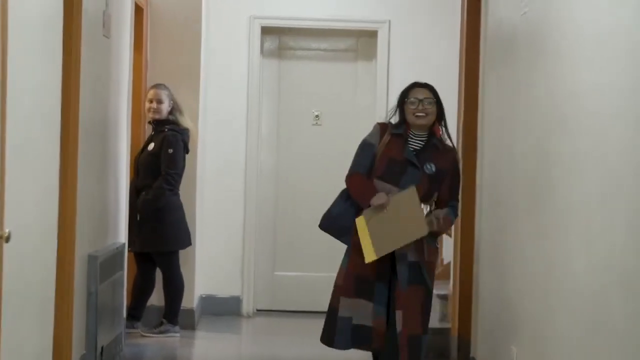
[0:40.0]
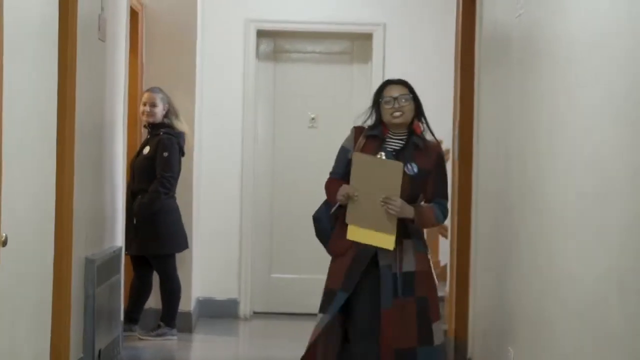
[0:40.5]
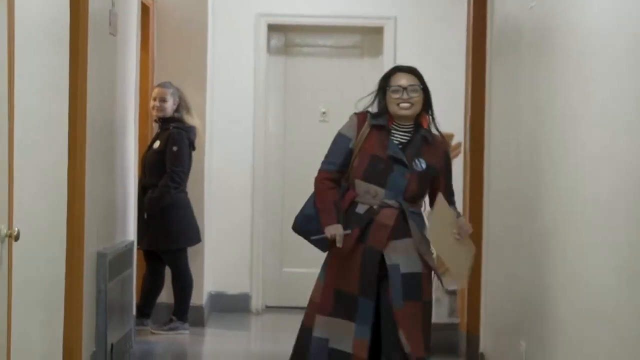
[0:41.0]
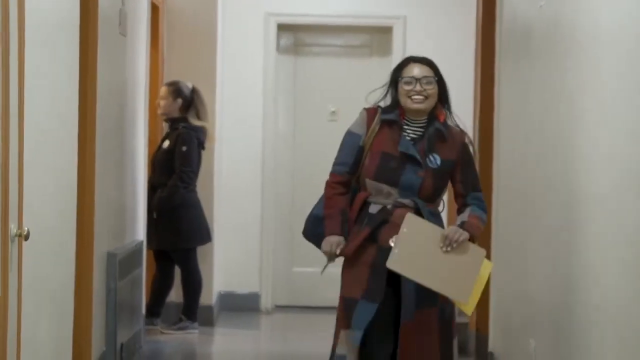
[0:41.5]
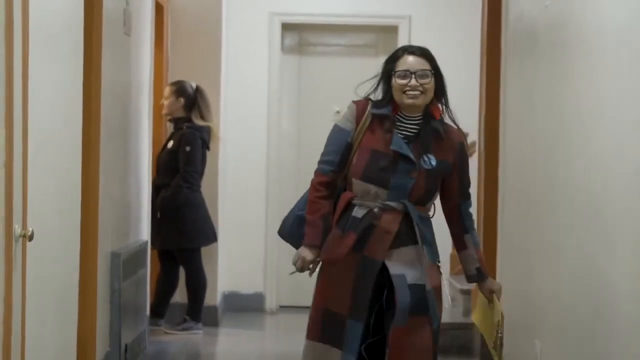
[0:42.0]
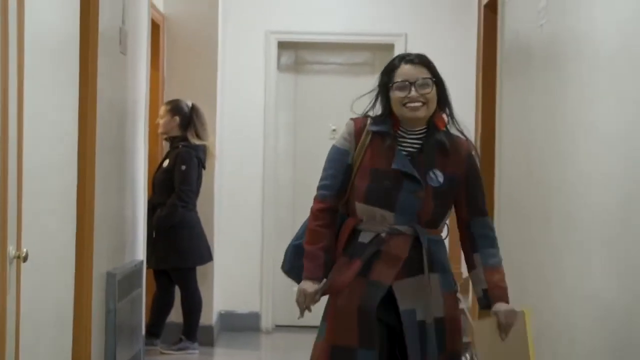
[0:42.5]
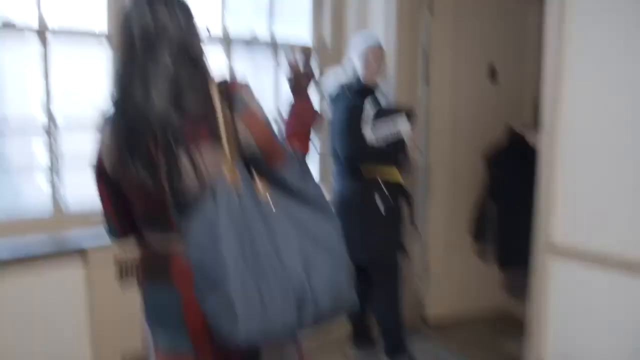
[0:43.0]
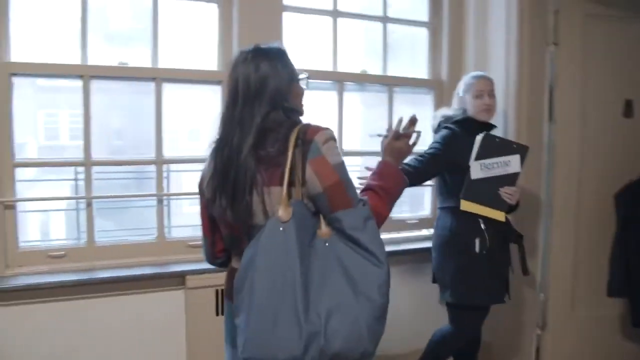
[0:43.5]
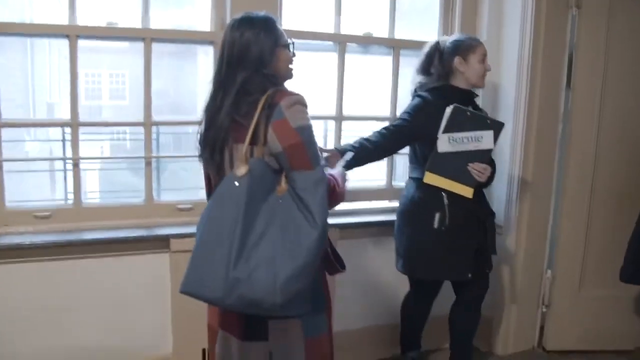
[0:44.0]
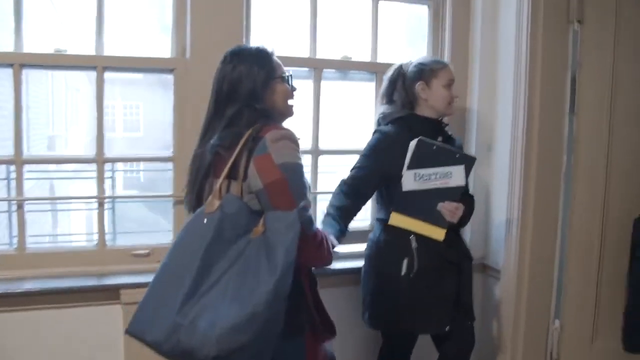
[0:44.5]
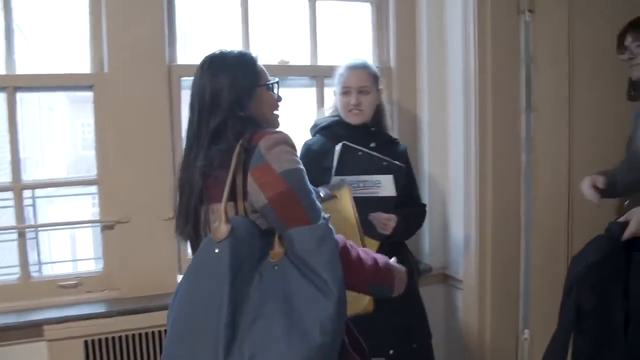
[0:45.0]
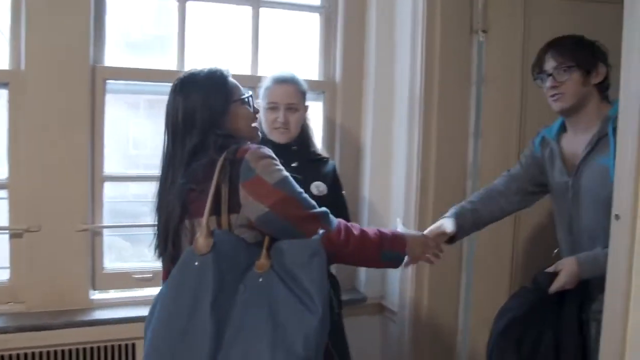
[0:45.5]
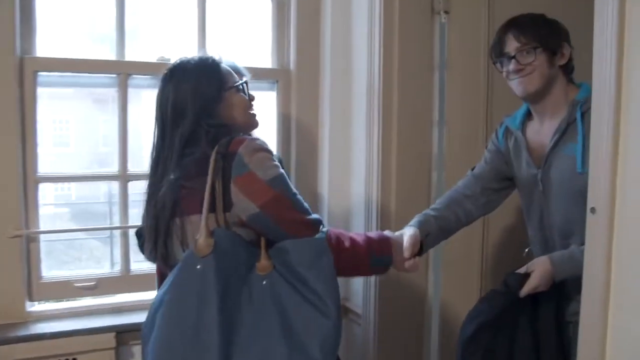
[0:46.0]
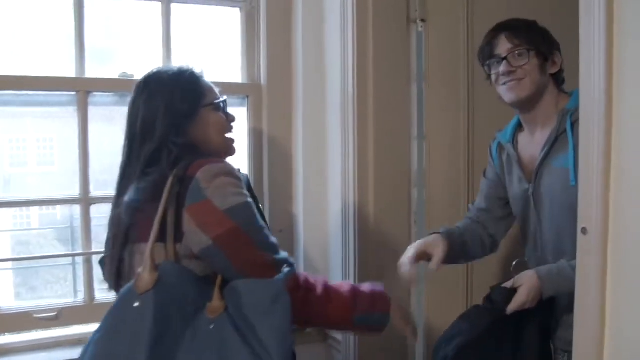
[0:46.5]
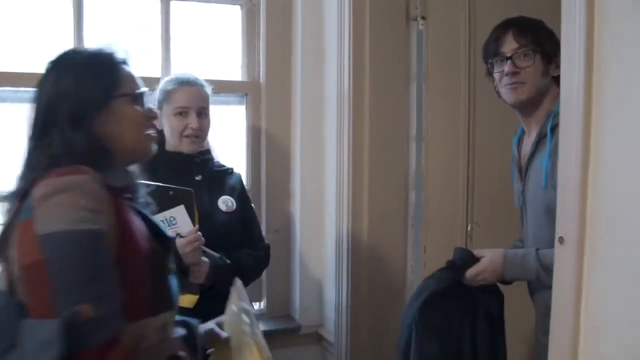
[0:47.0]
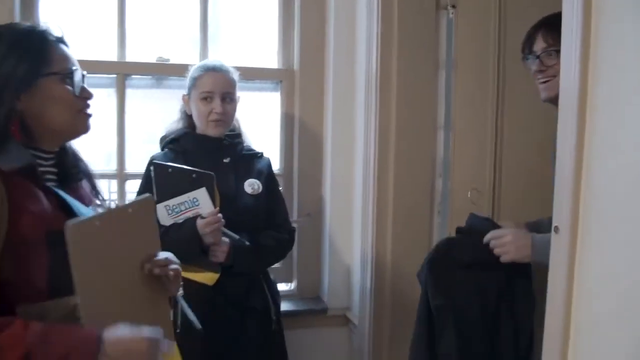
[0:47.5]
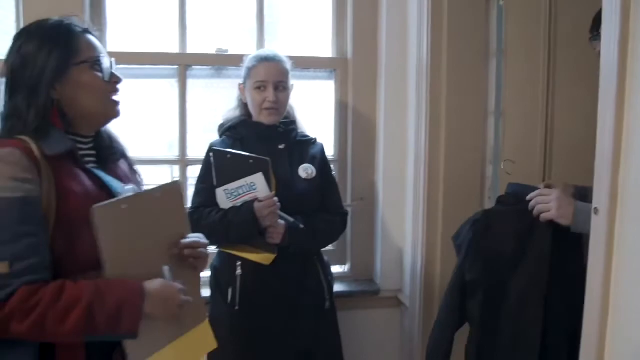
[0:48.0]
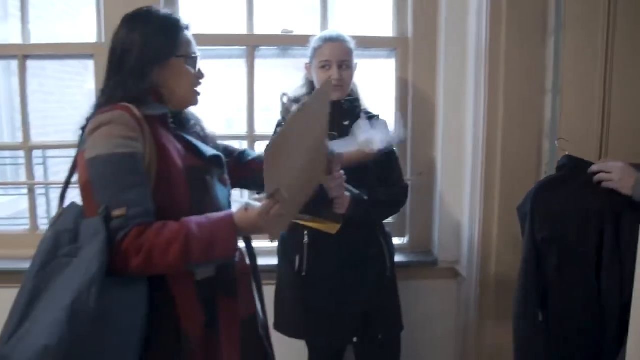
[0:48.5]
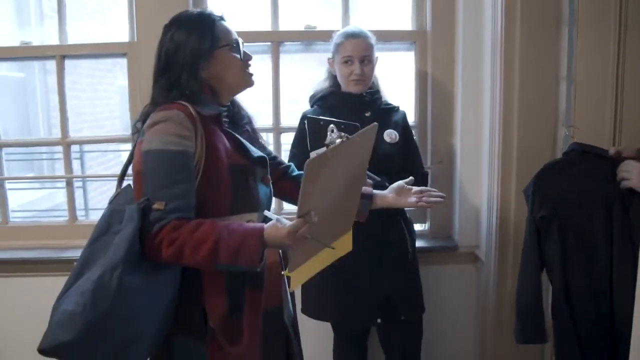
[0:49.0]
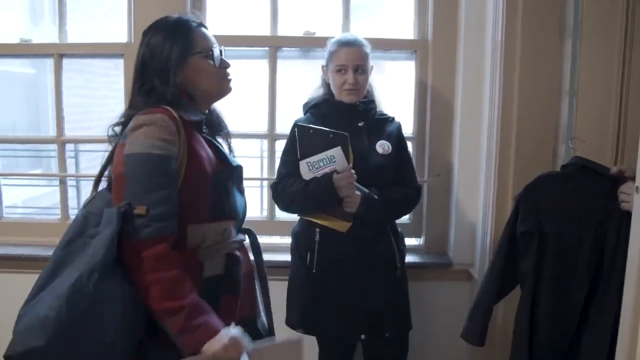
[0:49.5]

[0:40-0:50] She comes out of a door and meets other people, possibly visiting another journalist. She shakes hands and smiles with the person she came to meet, while another woman, possibly a secretary, introduces her to her boss.